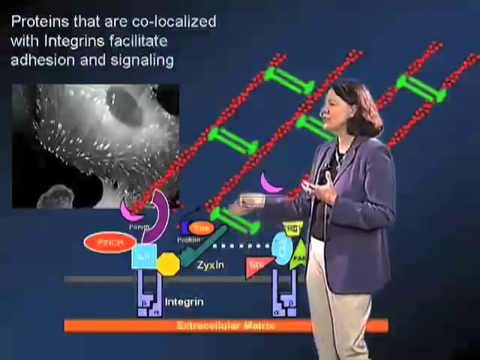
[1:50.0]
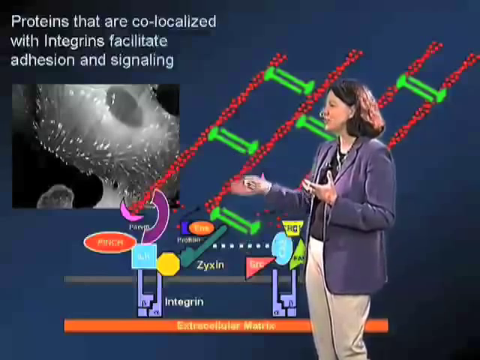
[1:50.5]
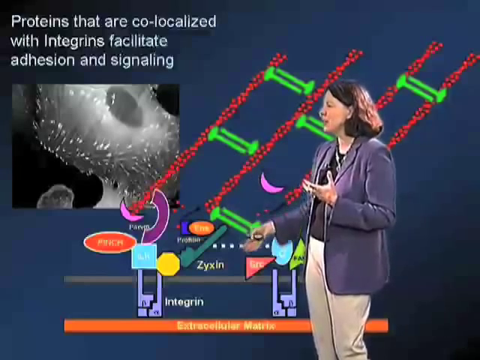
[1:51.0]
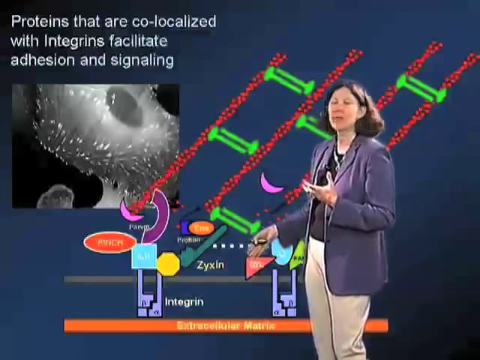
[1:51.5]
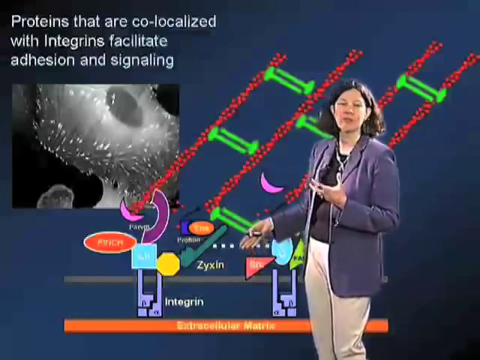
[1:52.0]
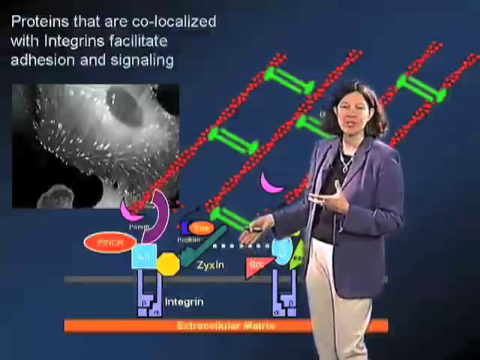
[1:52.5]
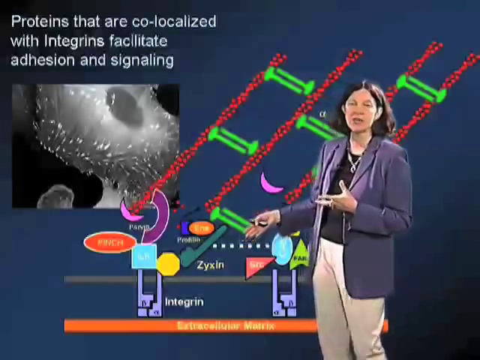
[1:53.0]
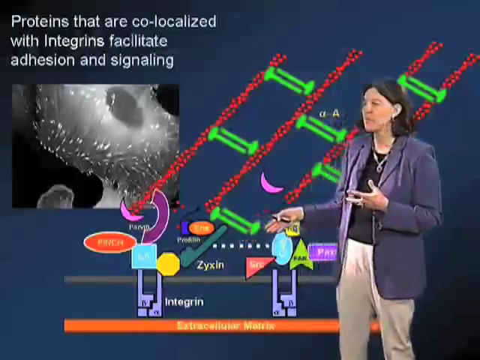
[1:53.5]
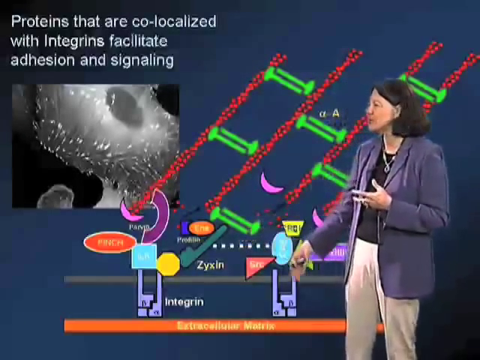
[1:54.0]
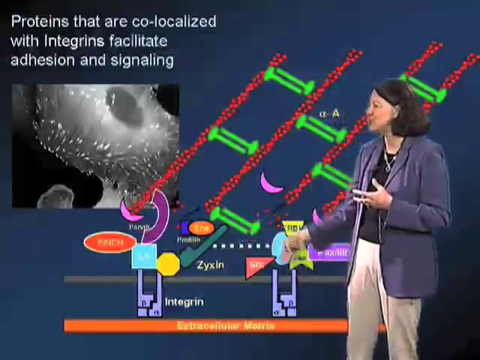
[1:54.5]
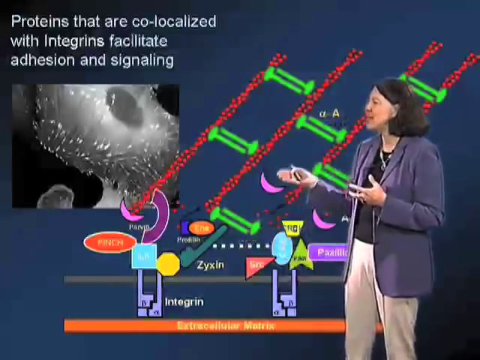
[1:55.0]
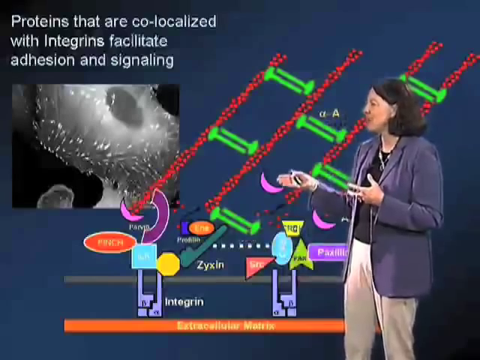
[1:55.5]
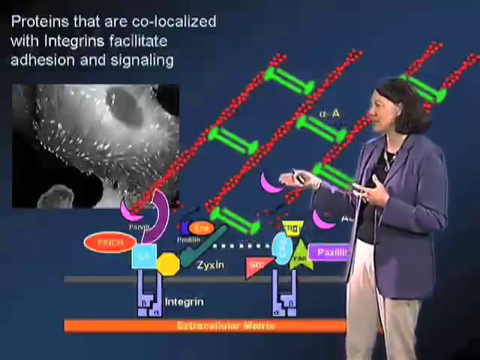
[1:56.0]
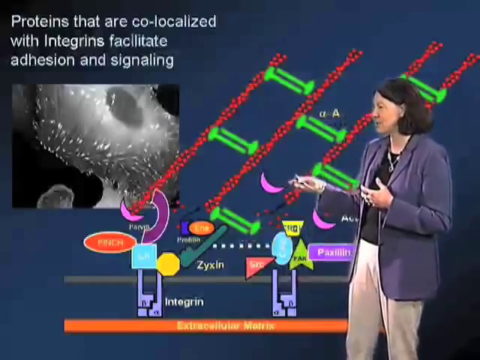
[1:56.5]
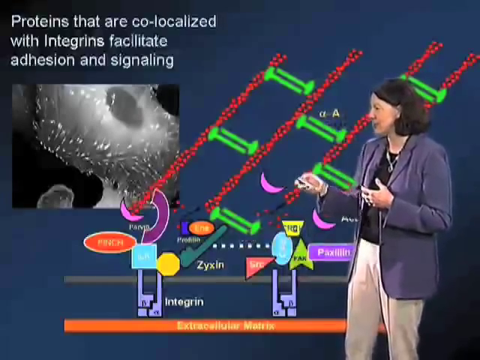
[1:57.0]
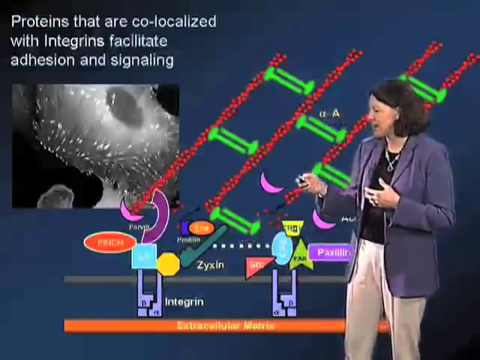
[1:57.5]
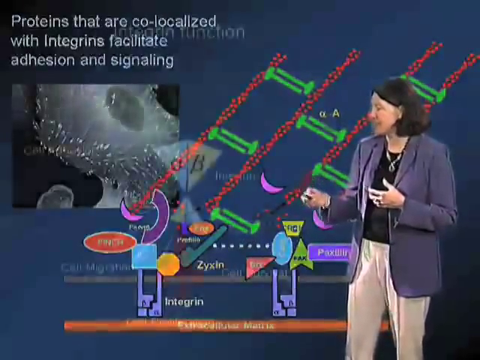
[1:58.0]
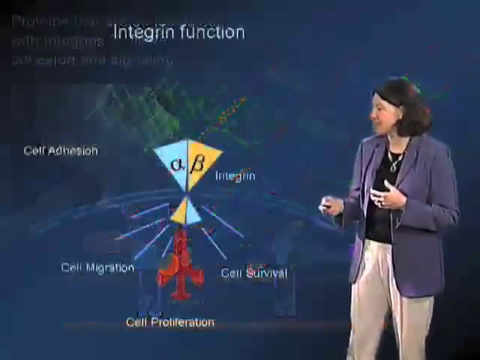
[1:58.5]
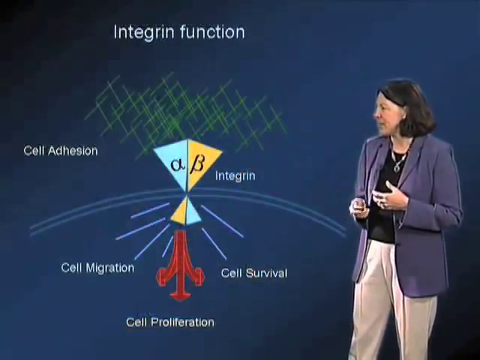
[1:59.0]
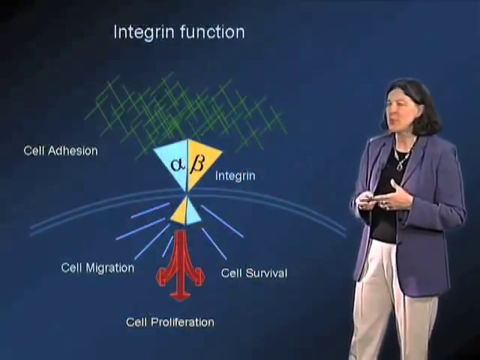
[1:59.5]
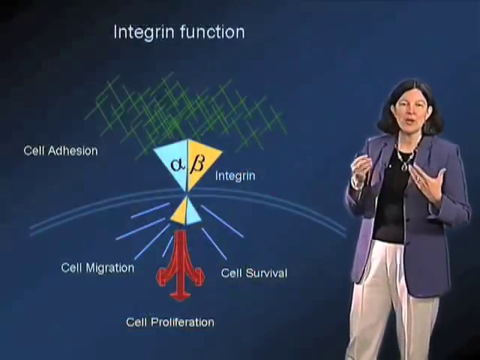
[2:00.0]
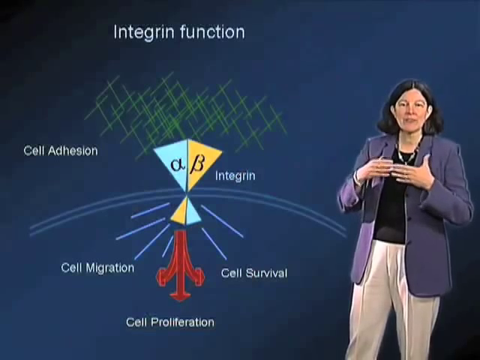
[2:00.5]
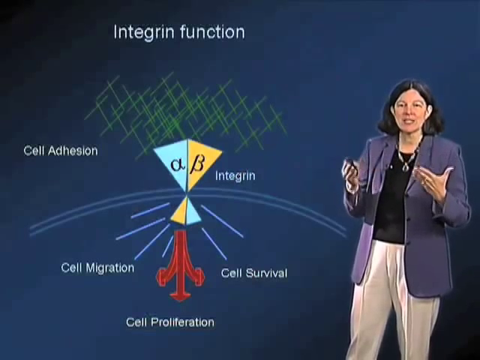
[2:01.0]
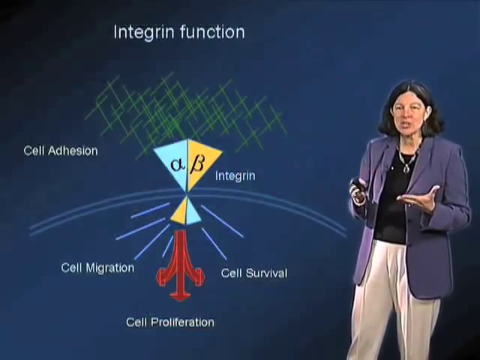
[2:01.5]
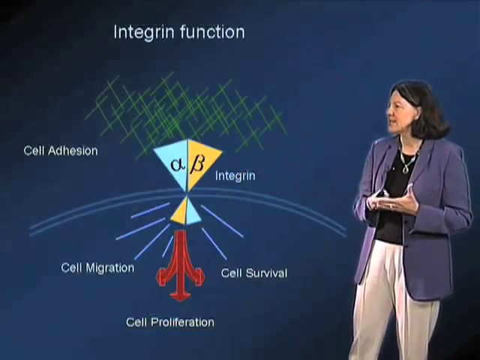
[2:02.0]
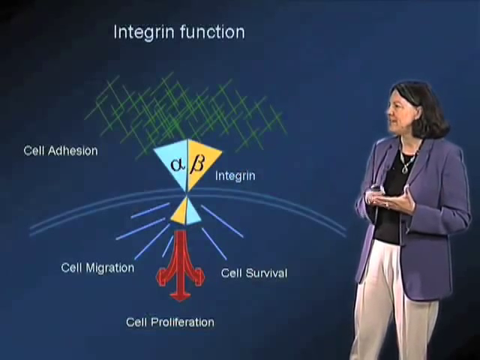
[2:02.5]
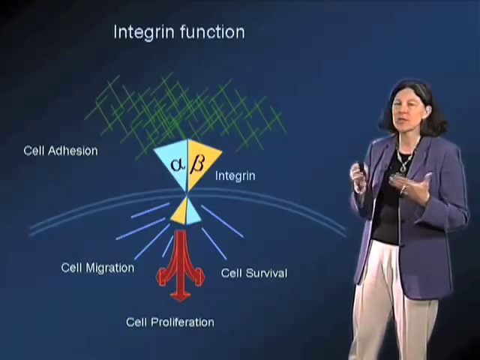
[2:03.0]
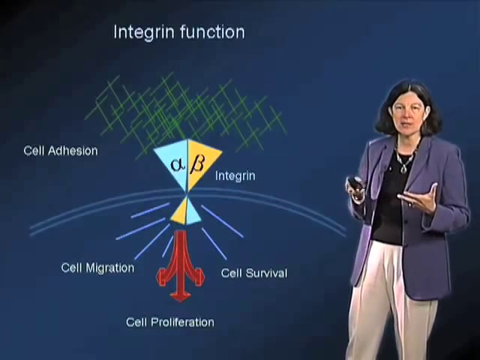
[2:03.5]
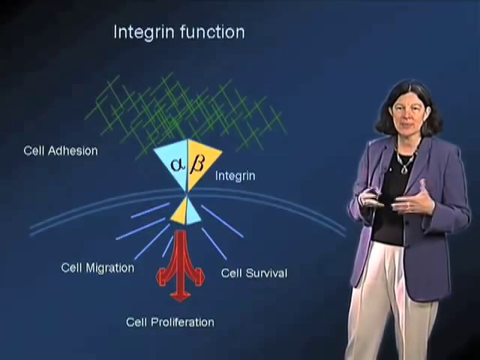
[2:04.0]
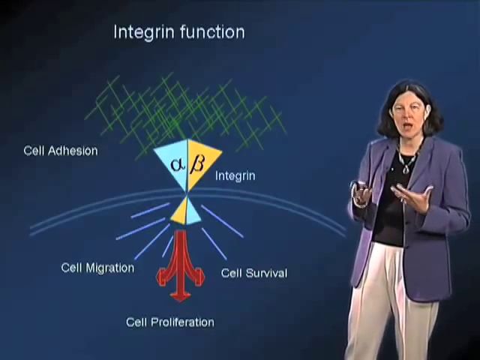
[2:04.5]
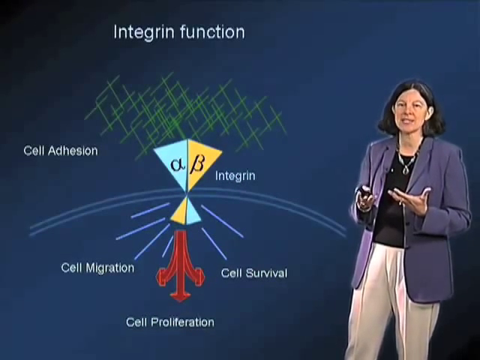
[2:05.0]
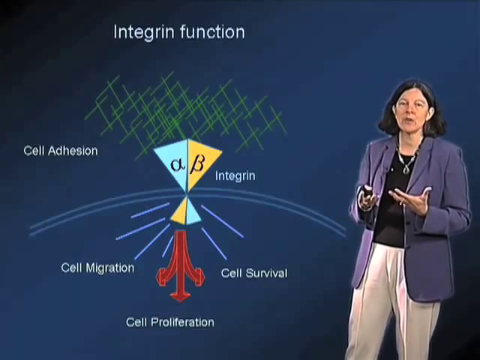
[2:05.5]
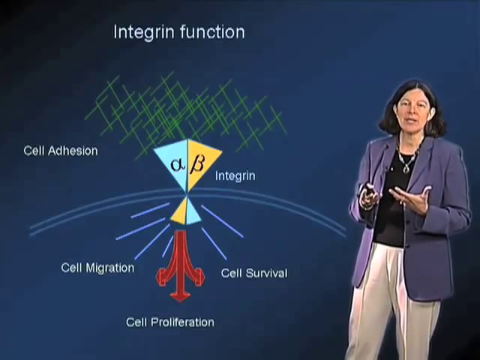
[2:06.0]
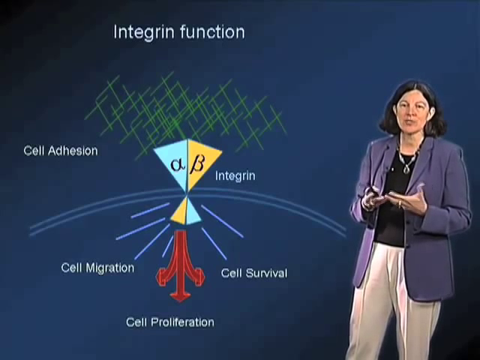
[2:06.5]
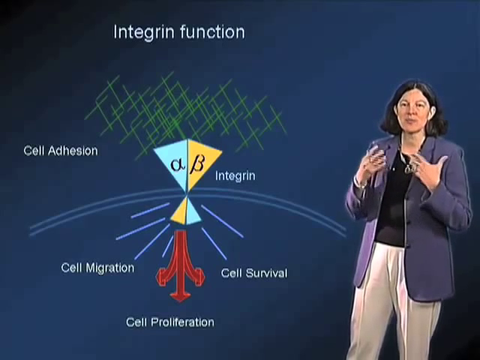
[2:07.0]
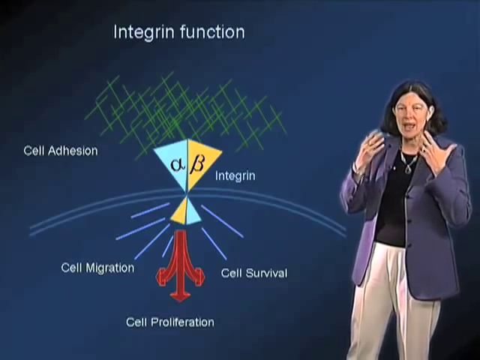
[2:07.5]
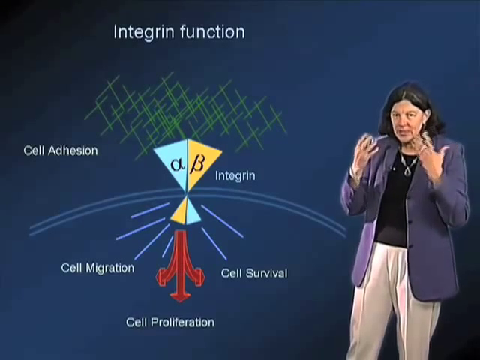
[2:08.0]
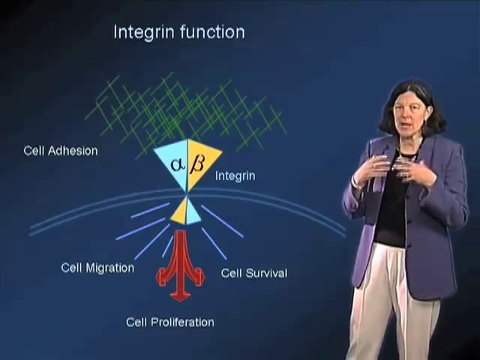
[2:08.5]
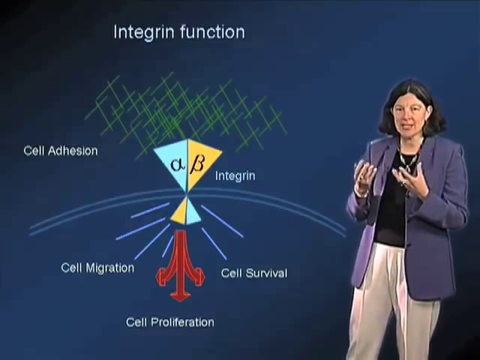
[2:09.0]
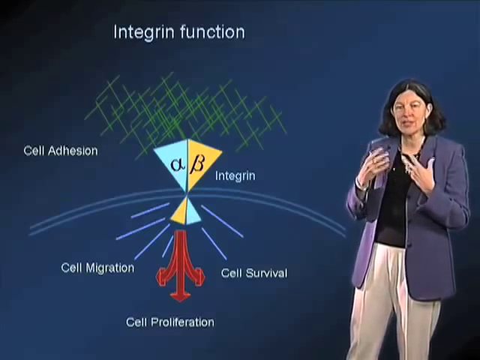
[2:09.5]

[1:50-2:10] A woman is in front of a presentation-style screen with a blue background. White text in the top left corner identifies that proteins that are co-localized with integrins facilitate adhesion and signaling, and a large diagram using a variety of colors, shapes and labels takes up most of the screen. The woman uses her hand for emphasis, pointing to various features while continuing to talk to the camera or to the background. She looks down at the clicker in her right hand and presses it, changing the background to another blue background with the title "Integrin Function" and another diagram with more labels in white text as well as images. She looks toward the camera and occasionally back toward the background, using her hands to emphasize her points.